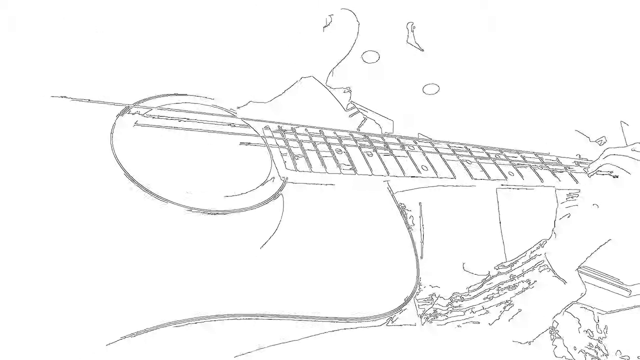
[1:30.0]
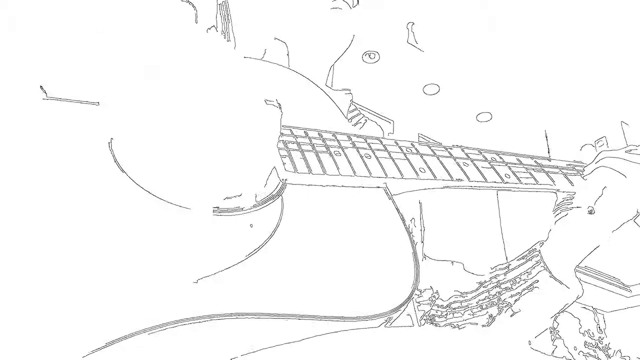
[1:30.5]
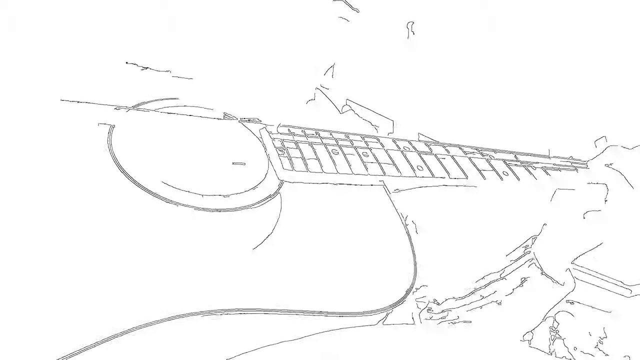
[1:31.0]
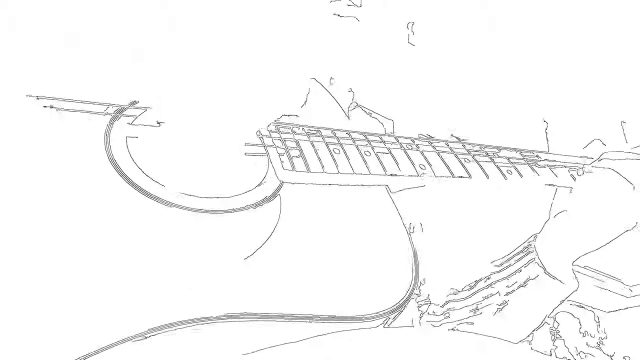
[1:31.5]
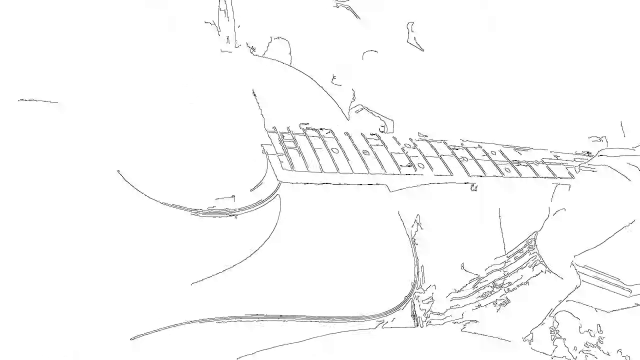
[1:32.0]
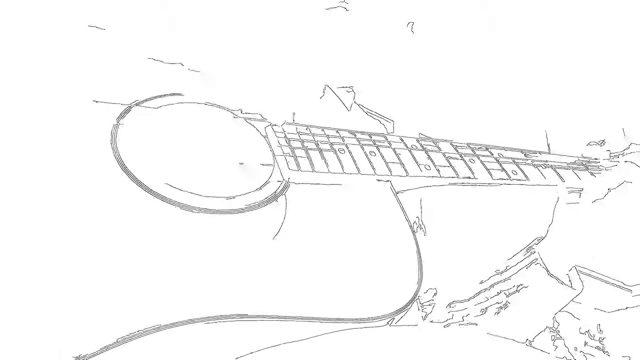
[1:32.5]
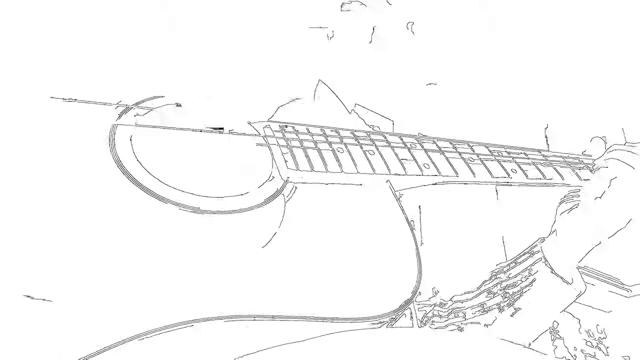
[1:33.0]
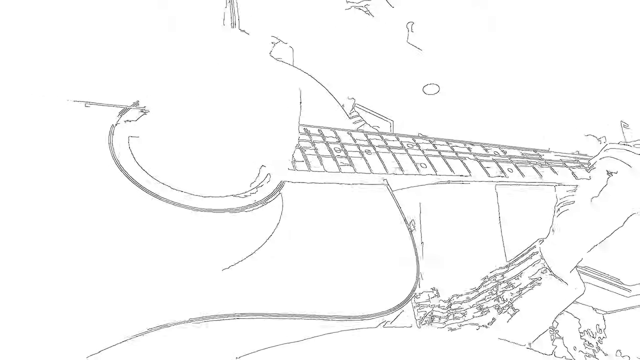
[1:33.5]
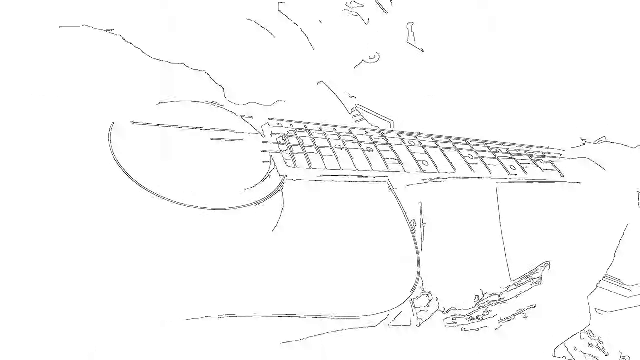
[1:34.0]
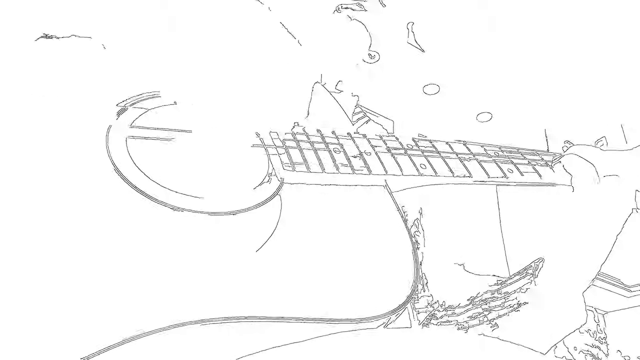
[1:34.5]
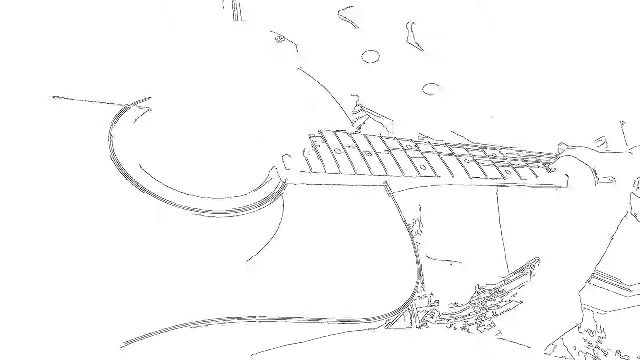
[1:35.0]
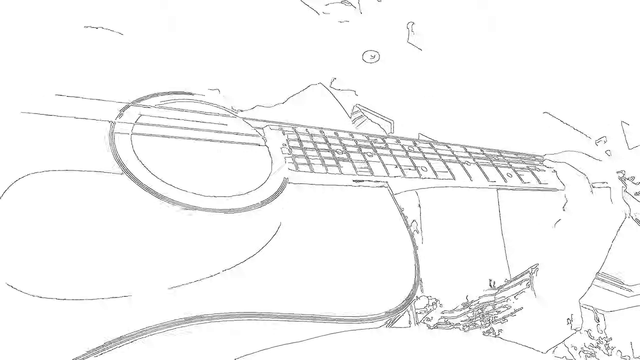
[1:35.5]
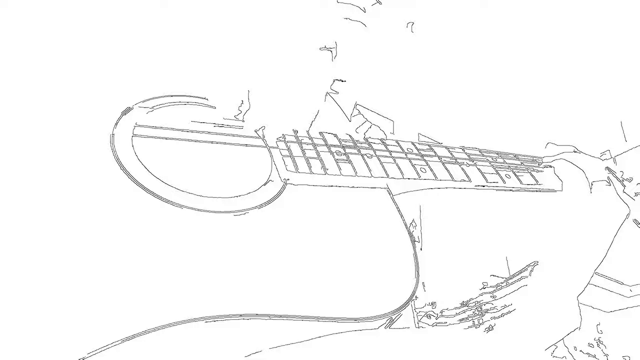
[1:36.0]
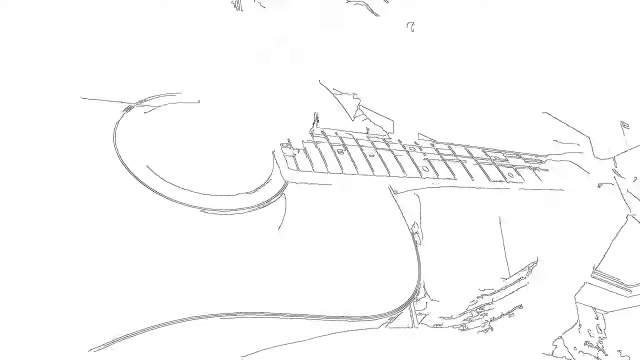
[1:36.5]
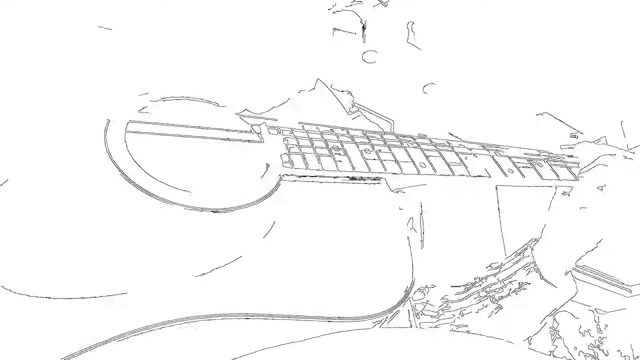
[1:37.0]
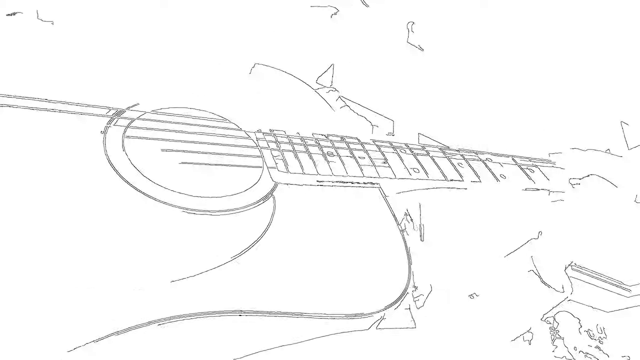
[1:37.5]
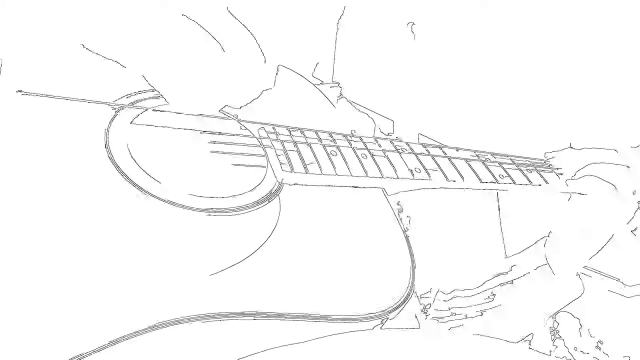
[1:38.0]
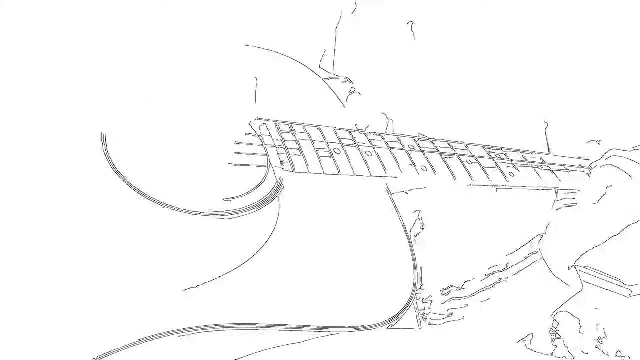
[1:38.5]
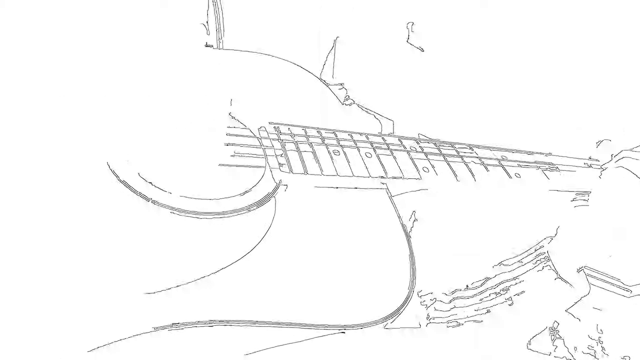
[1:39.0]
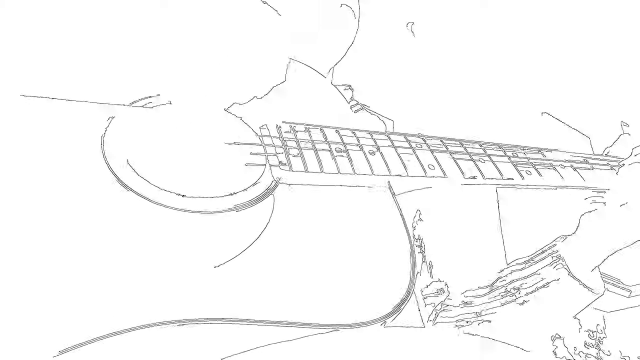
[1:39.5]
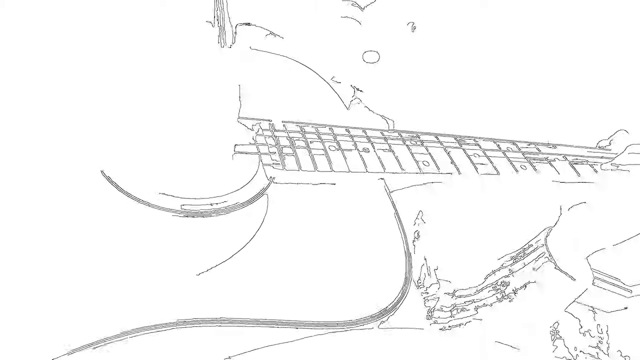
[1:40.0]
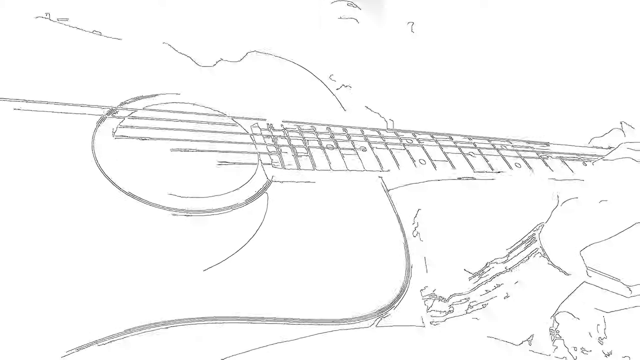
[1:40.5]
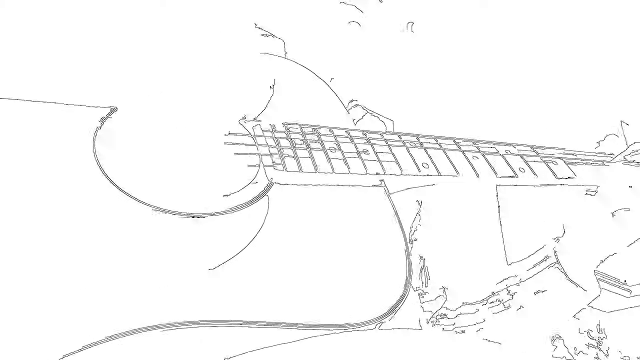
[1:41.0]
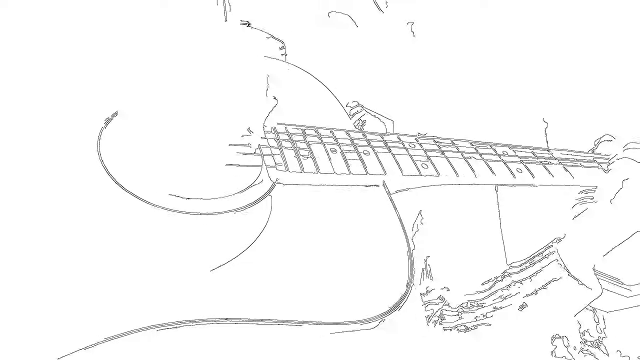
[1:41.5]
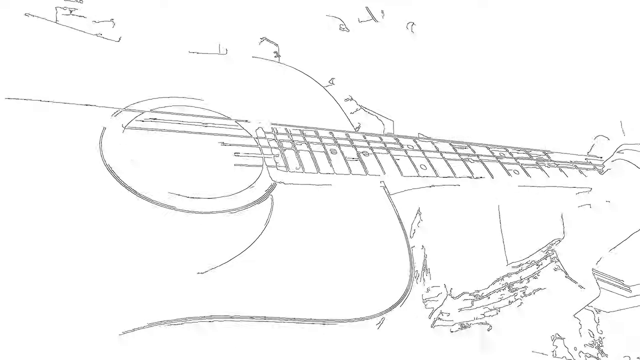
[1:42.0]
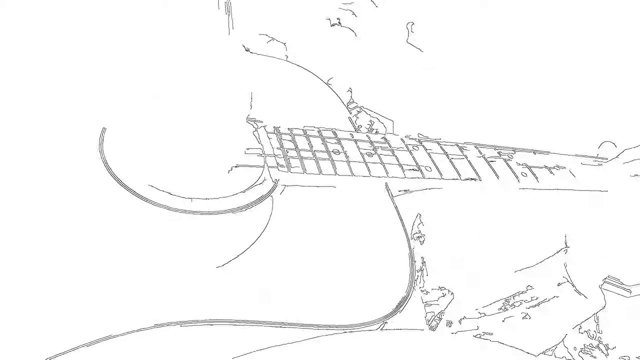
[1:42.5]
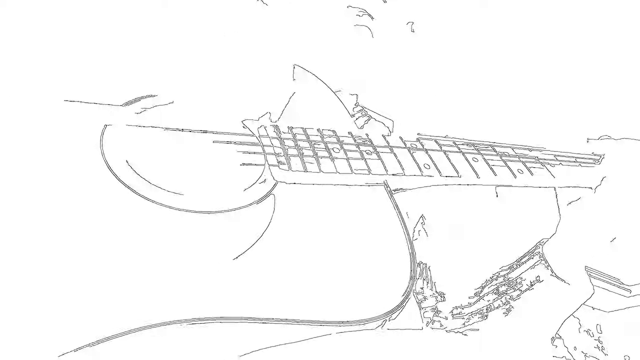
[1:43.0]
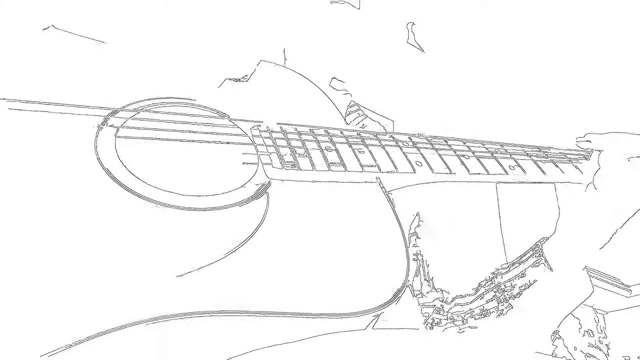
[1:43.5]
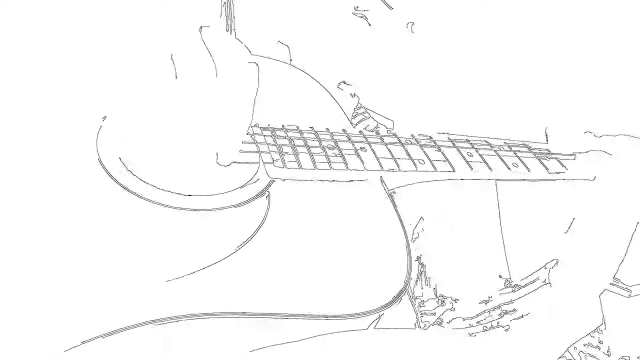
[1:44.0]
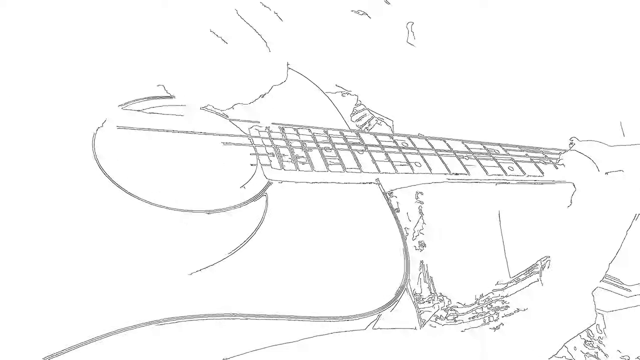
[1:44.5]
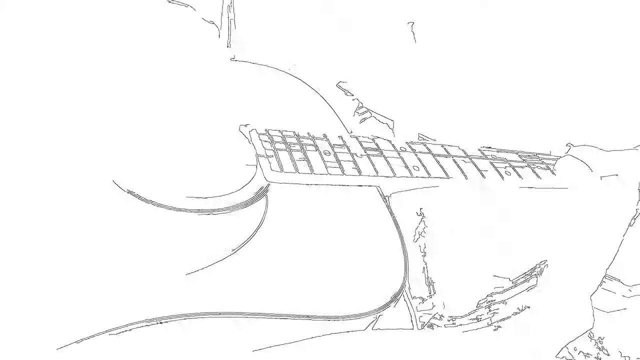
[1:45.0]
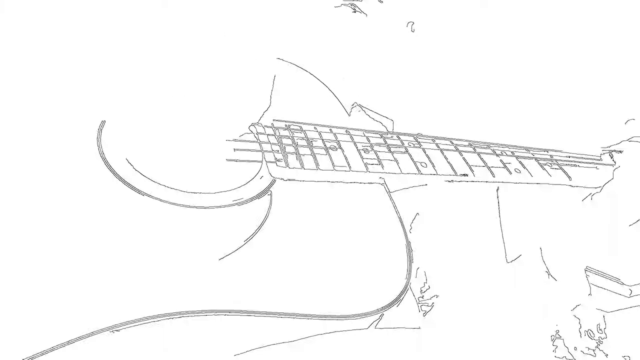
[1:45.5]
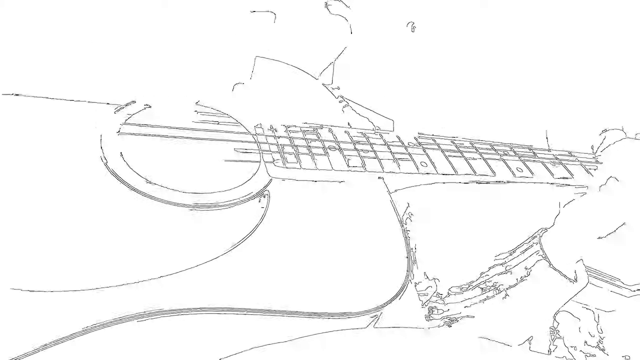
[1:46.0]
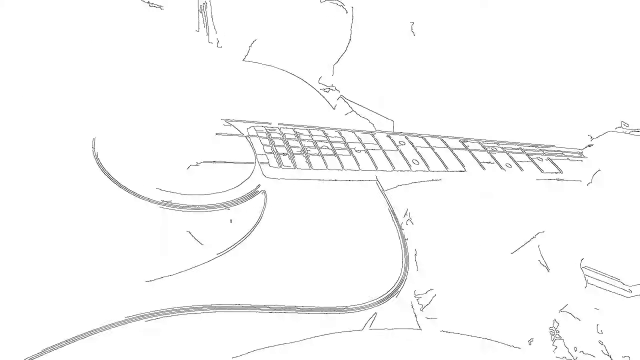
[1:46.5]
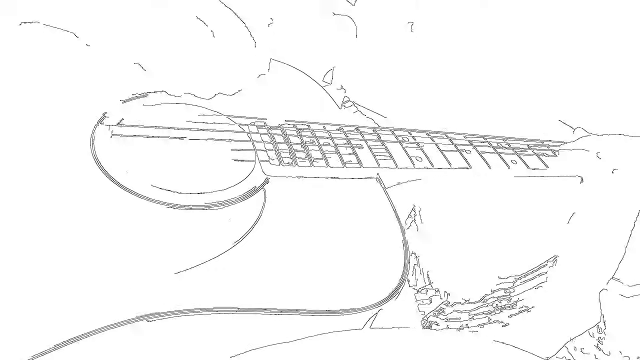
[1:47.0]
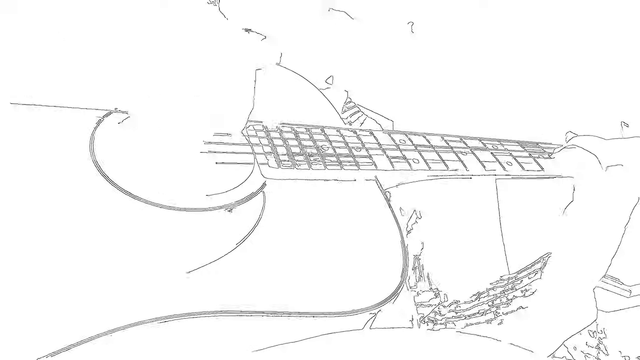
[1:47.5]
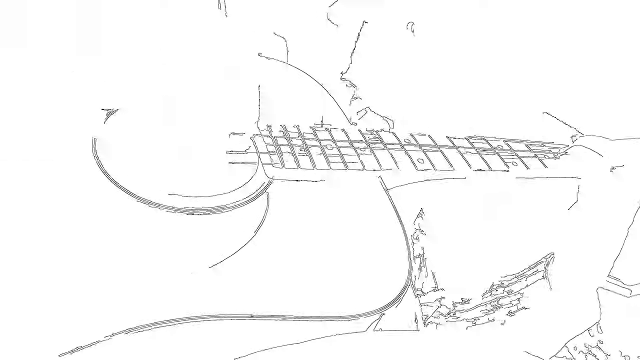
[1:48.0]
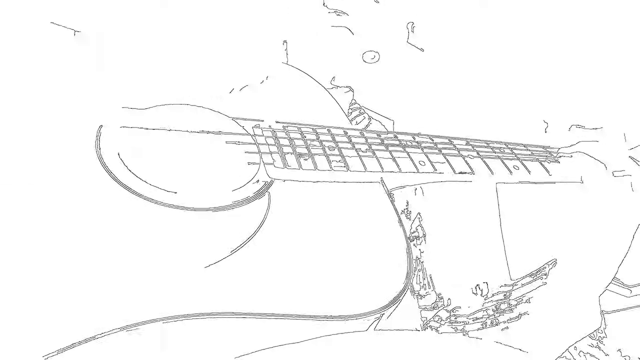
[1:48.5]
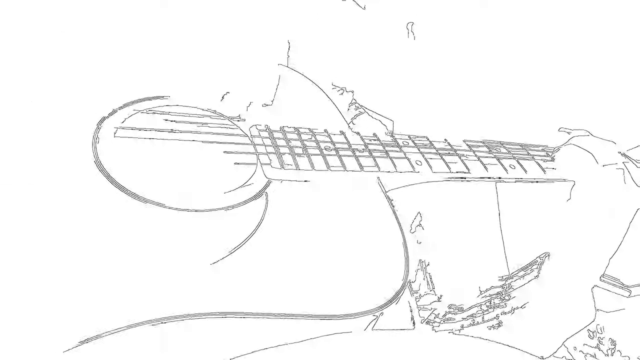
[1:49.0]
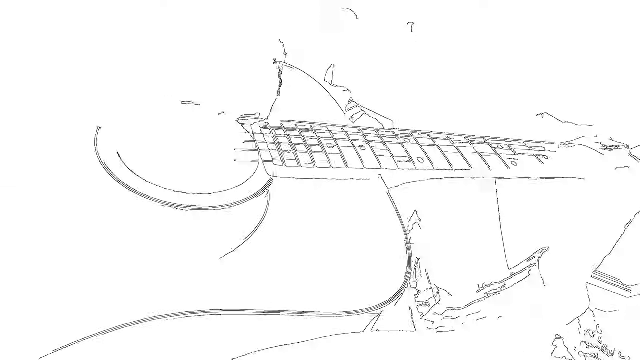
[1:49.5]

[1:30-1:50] The song continues, with the man's right hand stepping in and out of the top of the frame depending on the portion of the song. The camera is at knee level, looking across and up at him in quite a close shot. A filter makes the video look like a black-and-white illustration in the style of some popular 80s music videos. Because the camera is at knee height, his entire mouth is not visible as he sings; he sings up and across, almost as if into a microphone set just out of frame. He plays not quite rapidly, but with some enthusiasm. Behind him is what looks like an open-concept sort of kitchen with cabinets mounted up high, installed recessed lighting, and additional storage over all of the cabinets. There are at least two panes of a large window over what would be a kitchen sink. On the counter are other cooking utensils and possibly bottles of food items. His knee crosses into frame at times, almost as if he is sitting on a stool pulled back from a counter to film the guitar.